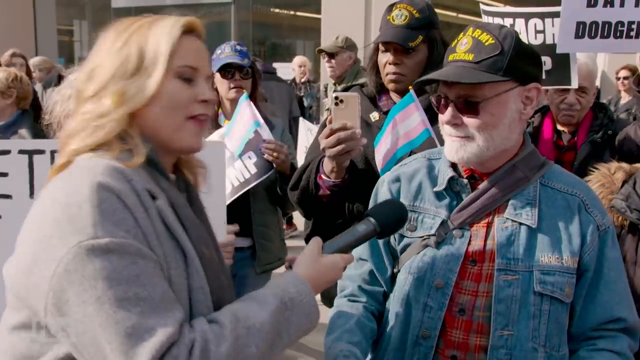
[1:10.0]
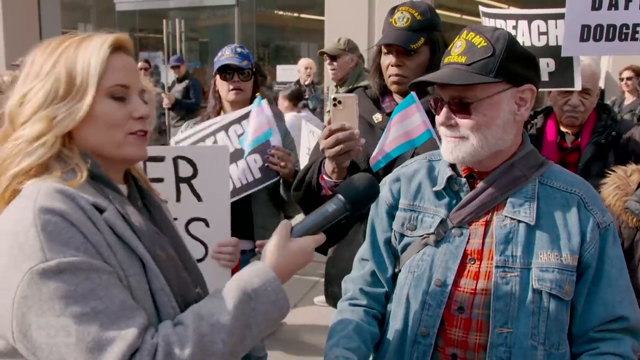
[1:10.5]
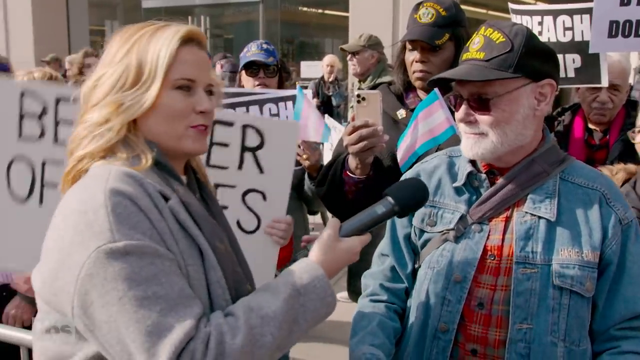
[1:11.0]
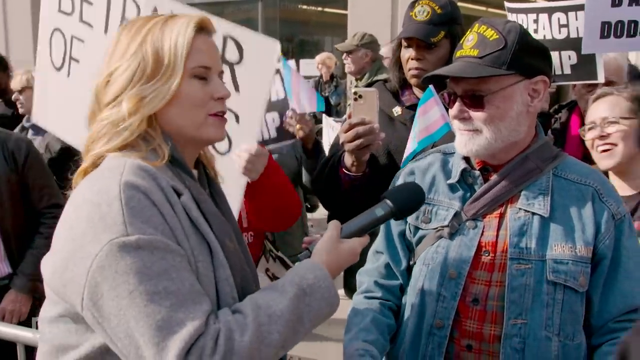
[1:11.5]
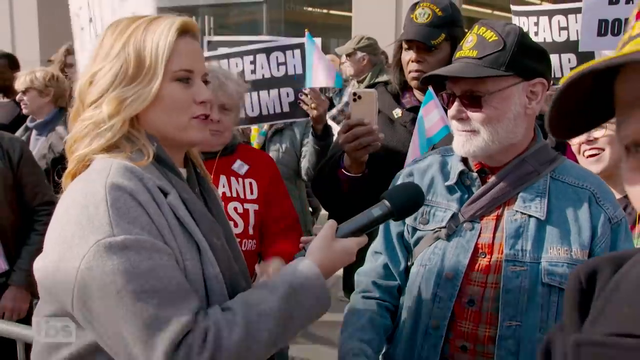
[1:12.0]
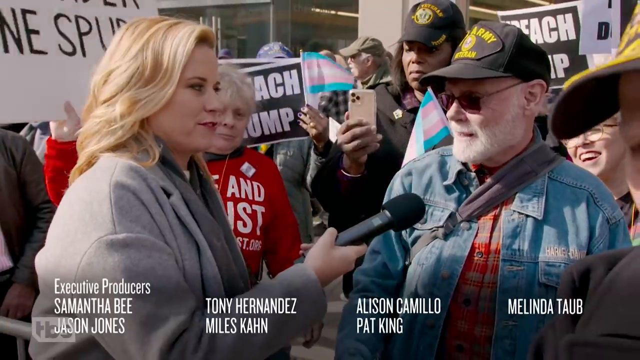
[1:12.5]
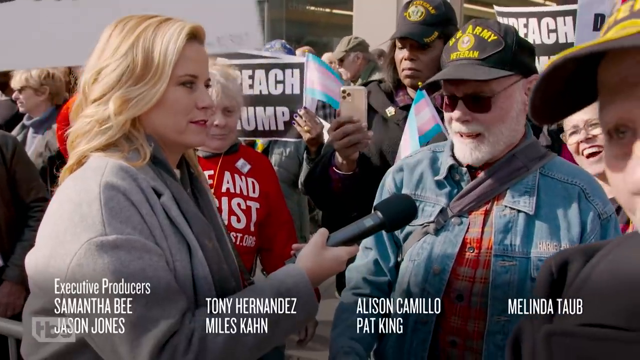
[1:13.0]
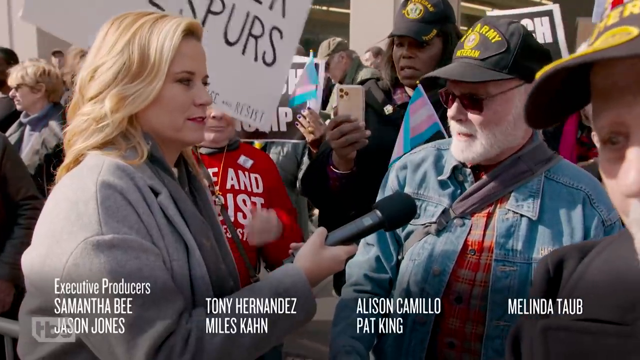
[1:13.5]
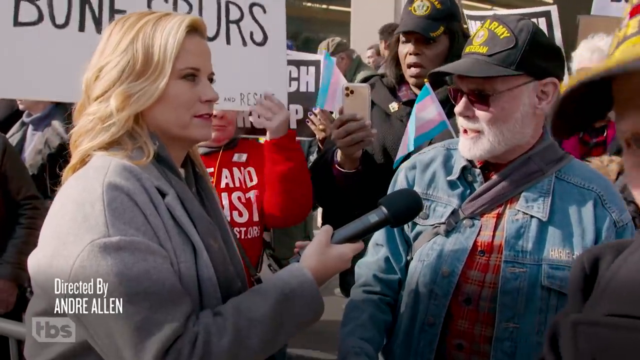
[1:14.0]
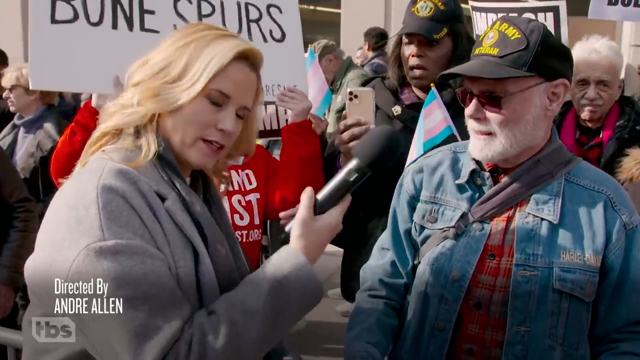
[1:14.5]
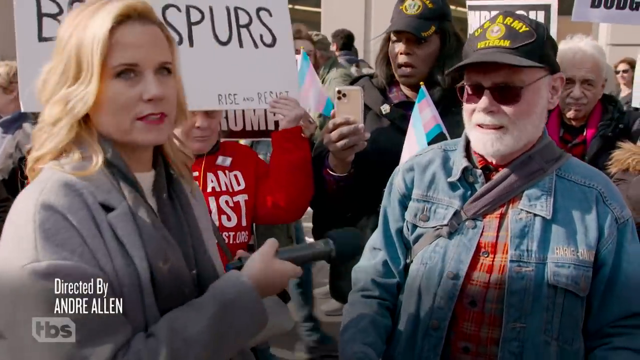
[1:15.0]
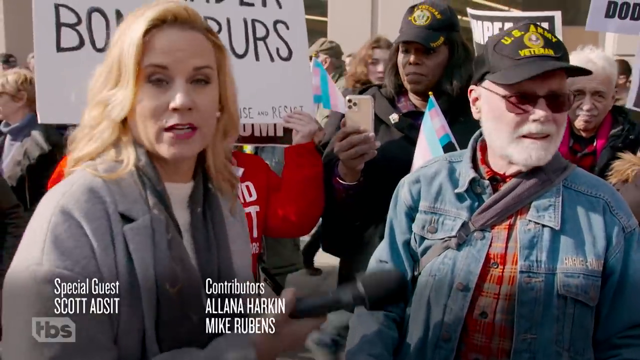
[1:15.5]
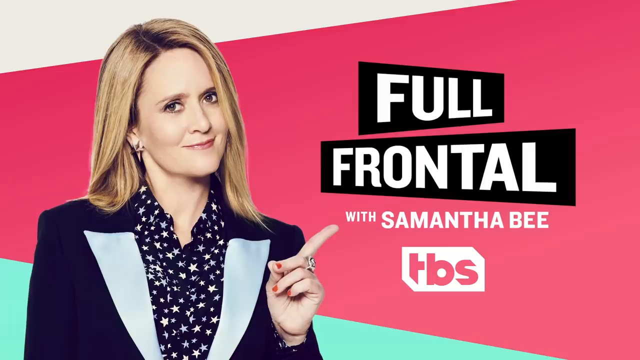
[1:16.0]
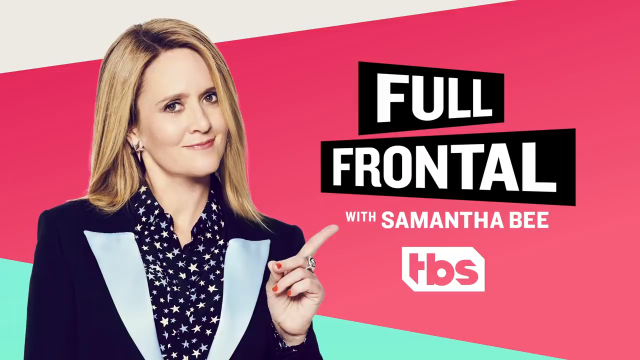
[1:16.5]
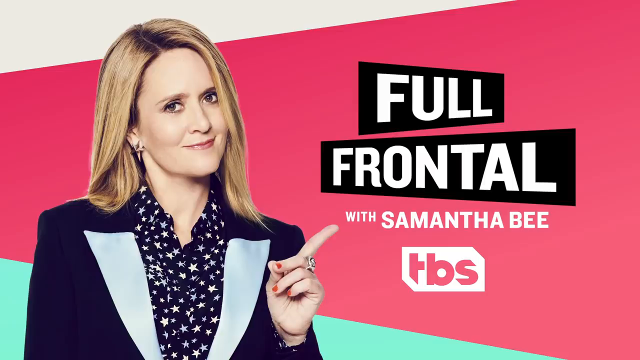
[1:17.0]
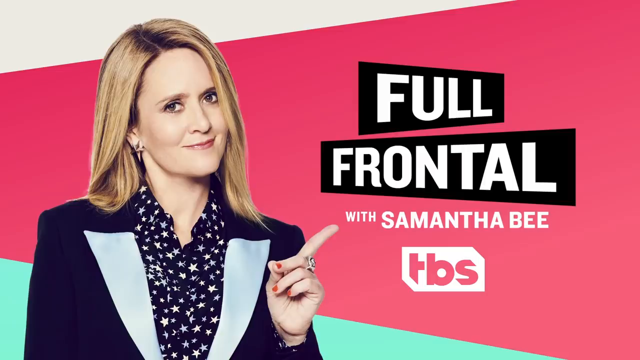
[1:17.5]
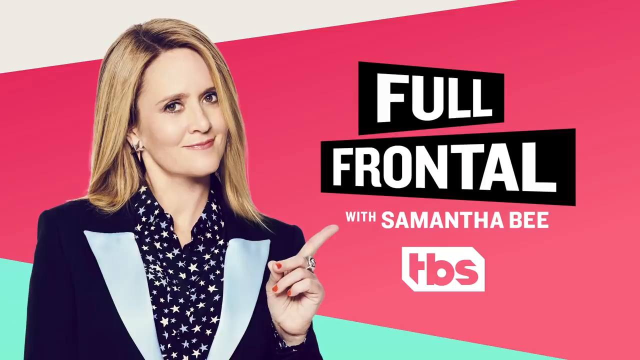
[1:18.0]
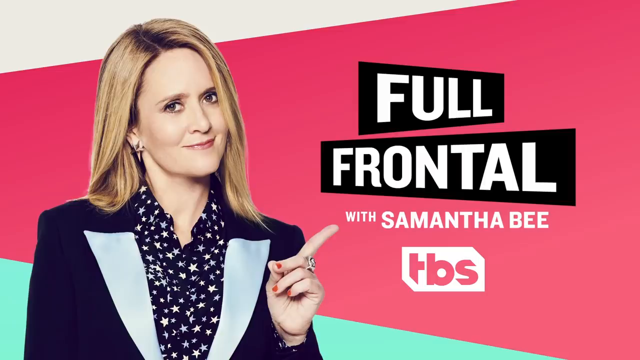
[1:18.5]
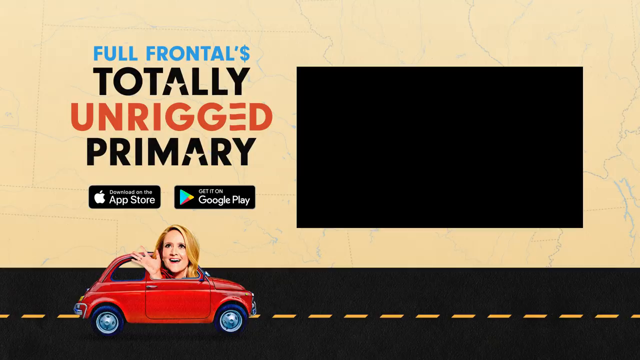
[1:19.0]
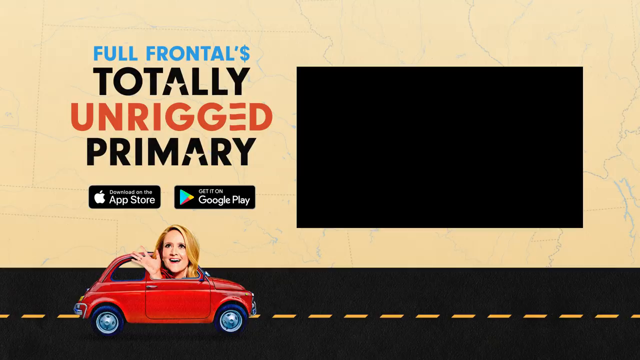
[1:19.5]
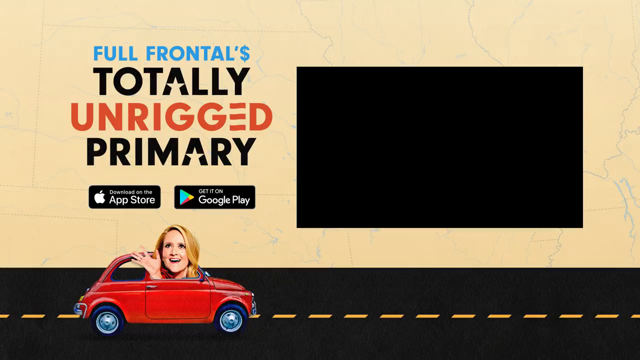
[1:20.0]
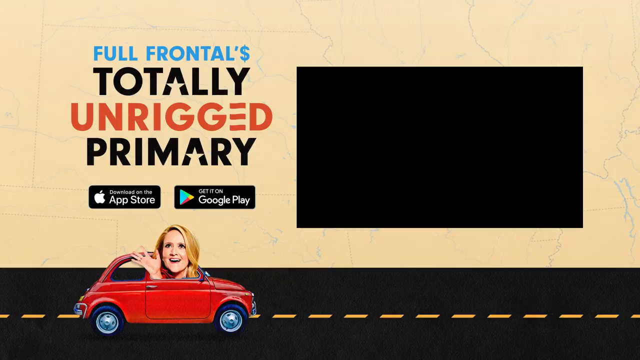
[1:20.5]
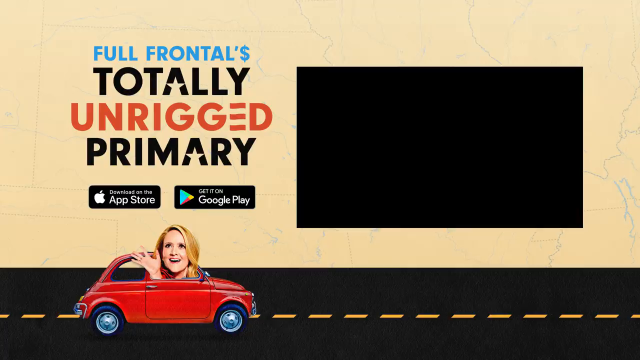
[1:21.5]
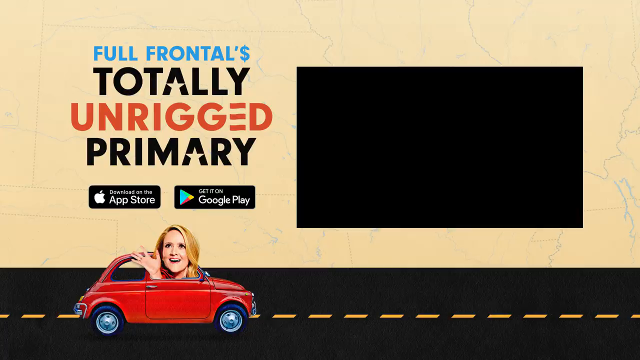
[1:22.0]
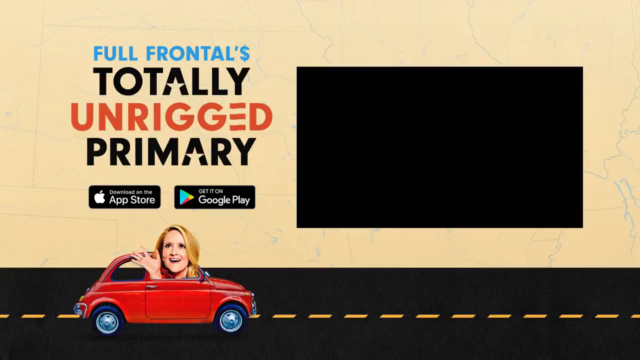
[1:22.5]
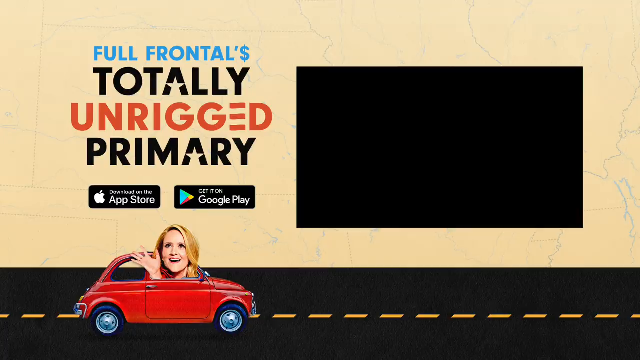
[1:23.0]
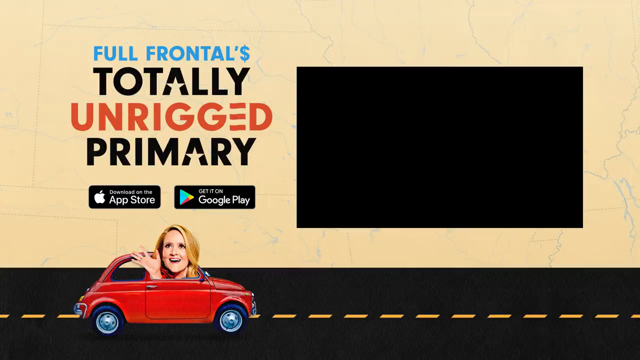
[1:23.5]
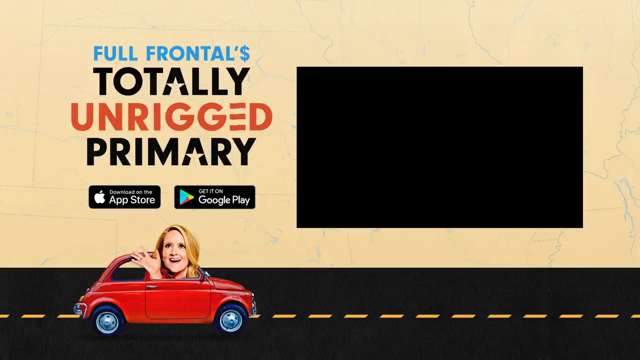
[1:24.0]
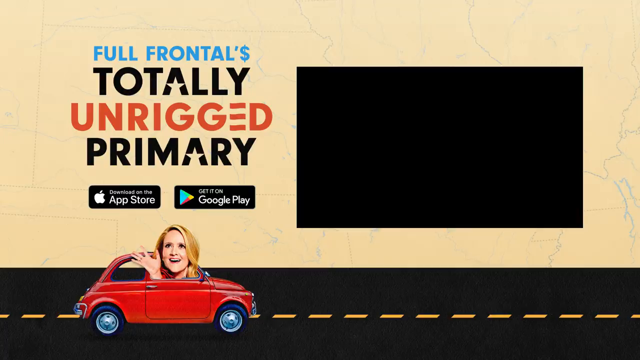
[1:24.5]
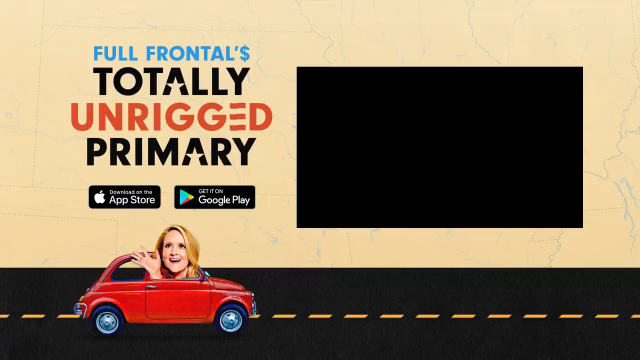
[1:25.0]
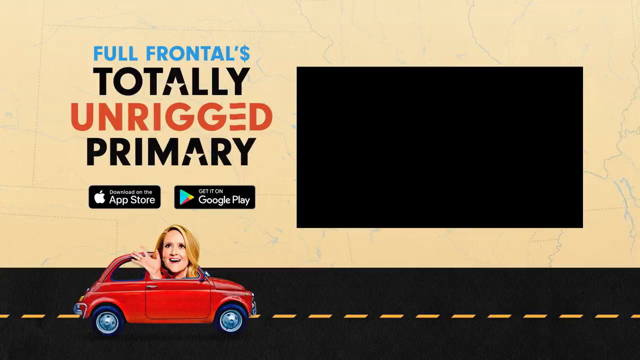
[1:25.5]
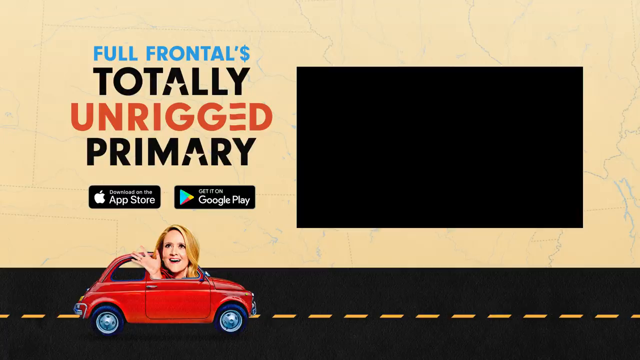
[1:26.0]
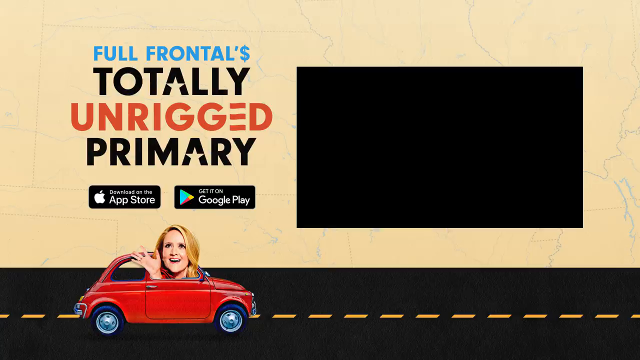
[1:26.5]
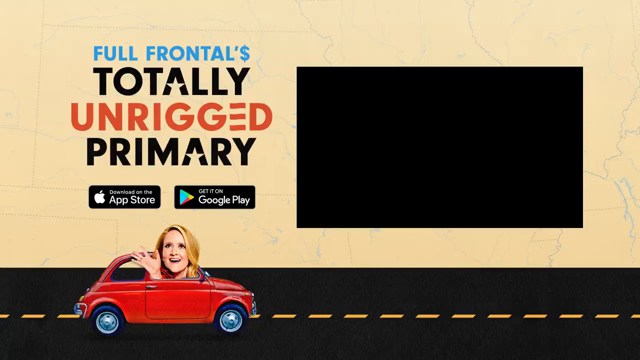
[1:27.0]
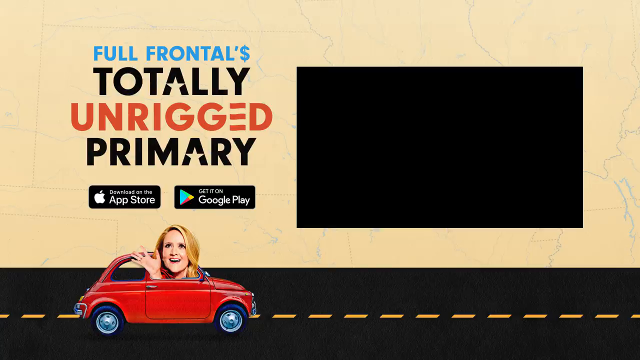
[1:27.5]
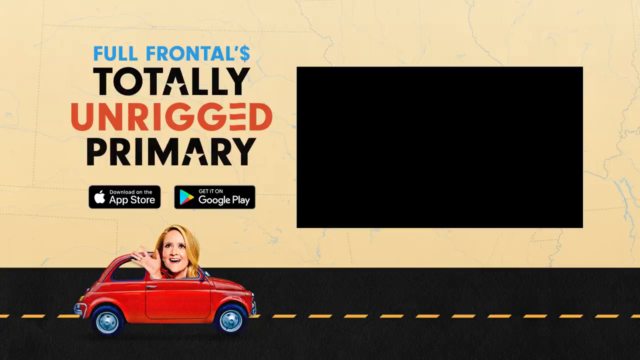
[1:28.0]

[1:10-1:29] Credits roll along the bottom as the interviewer finishes her interview with the older man with the gray beard, blue jean jacket, black ball cap reading "US Army veteran," and dark sunglasses. The setting is still some sort of protest, with many people in the background, guardrails, and lots of signs about impeaching Trump. The reporter, in the gray suit-like jacket and with blonde hair, holds the microphone, looks toward the camera, and does some sort of sign-off. A graphic then comes over the video reading "Full Frontal with Samantha Bee, TBS," along with a big image of a woman who looks like the interviewer, suggesting the show is Full Frontal and the interviewer may be Samantha Bee. A tag follows with another video to click, other information about the show, and links regarding subscribing.